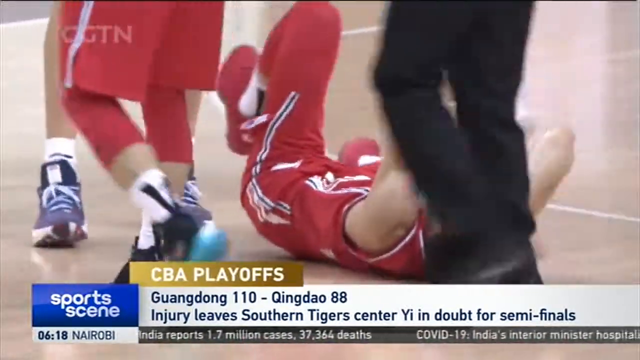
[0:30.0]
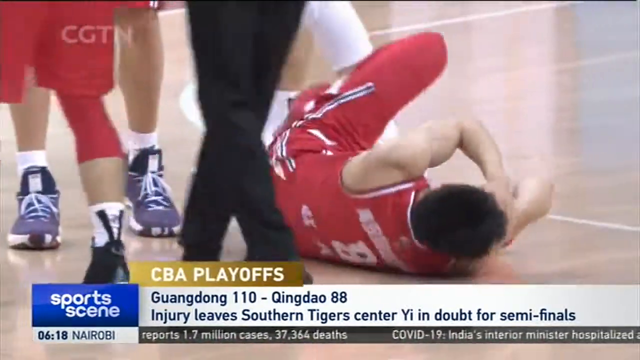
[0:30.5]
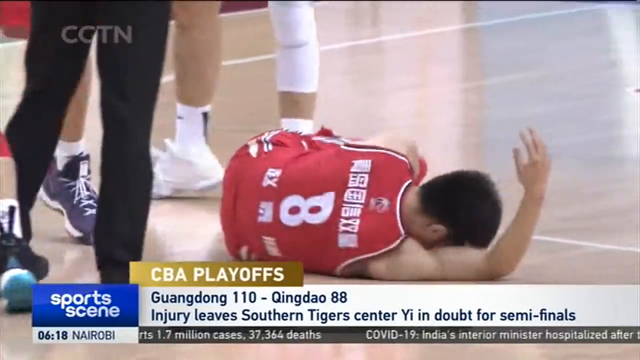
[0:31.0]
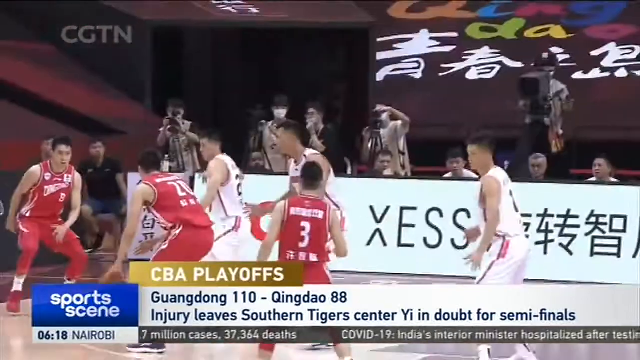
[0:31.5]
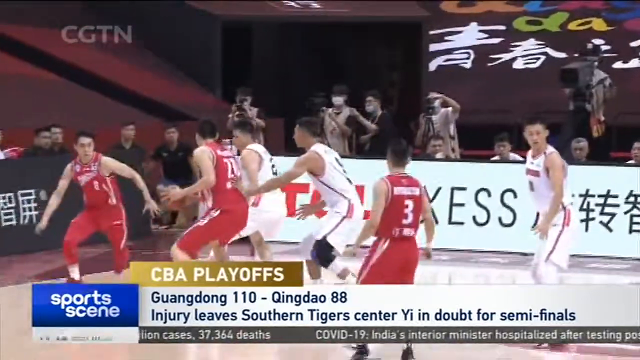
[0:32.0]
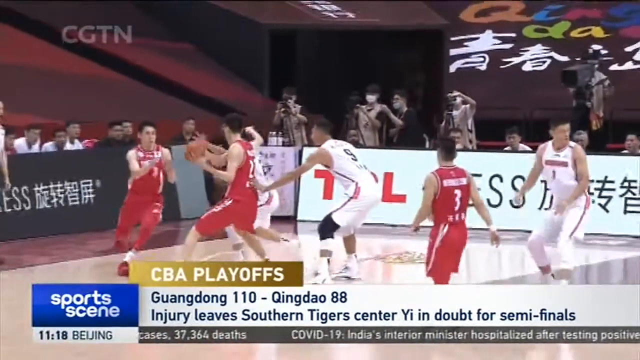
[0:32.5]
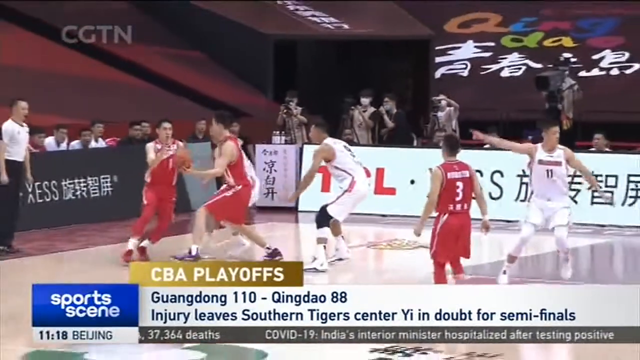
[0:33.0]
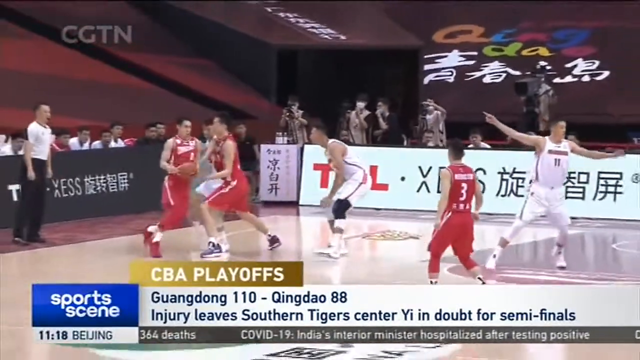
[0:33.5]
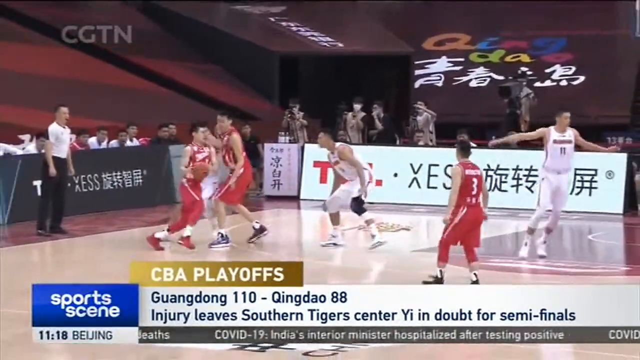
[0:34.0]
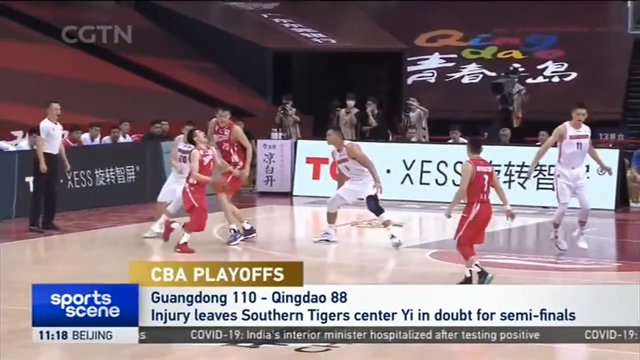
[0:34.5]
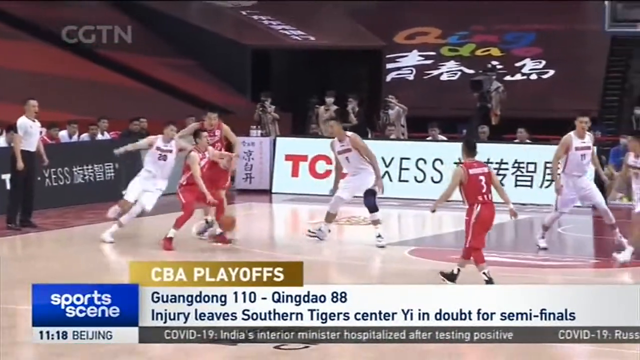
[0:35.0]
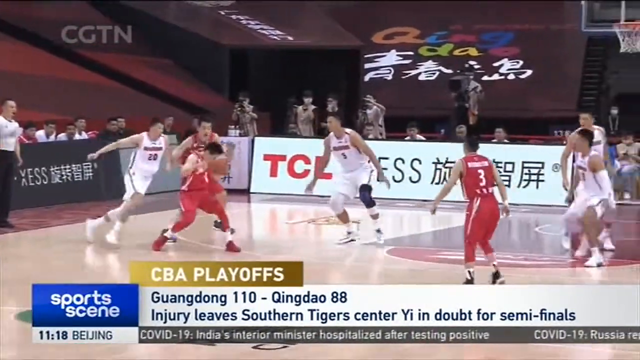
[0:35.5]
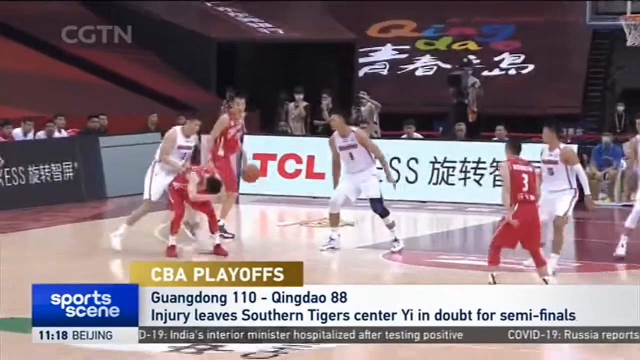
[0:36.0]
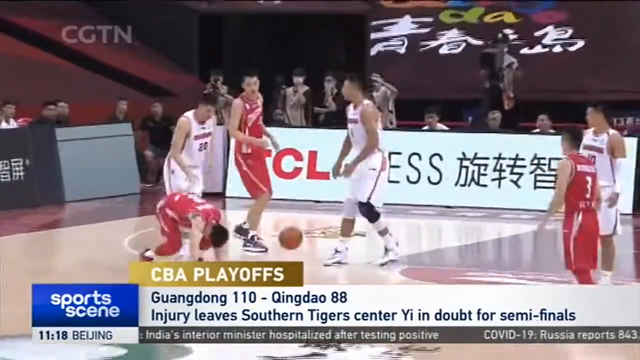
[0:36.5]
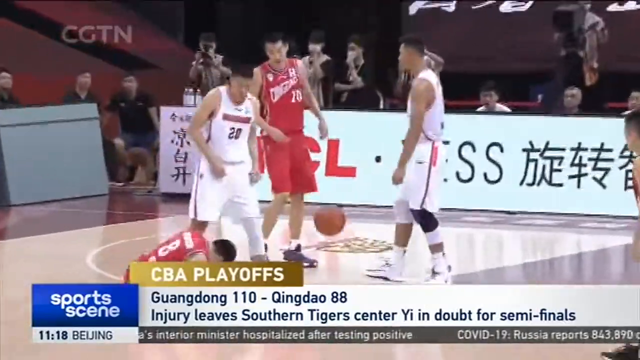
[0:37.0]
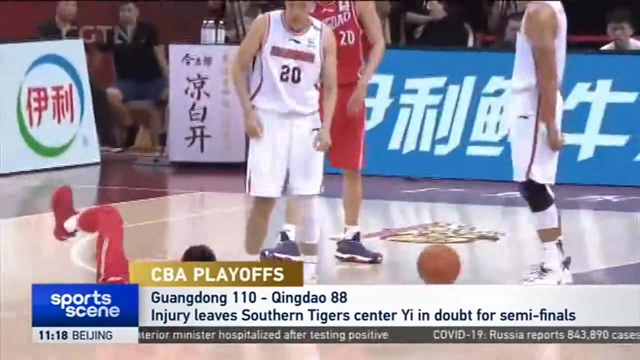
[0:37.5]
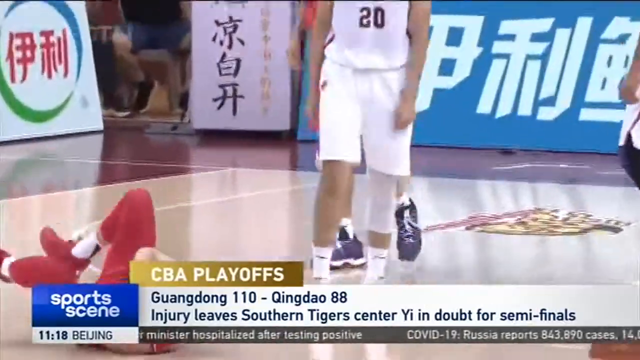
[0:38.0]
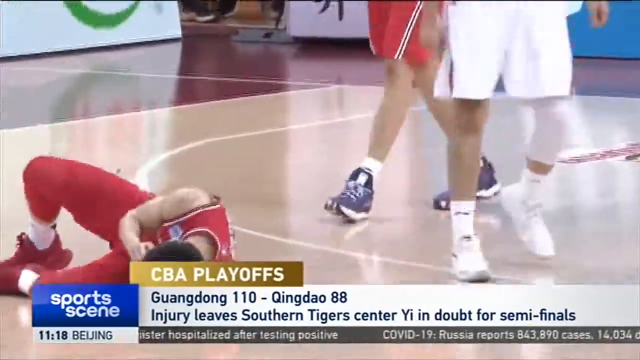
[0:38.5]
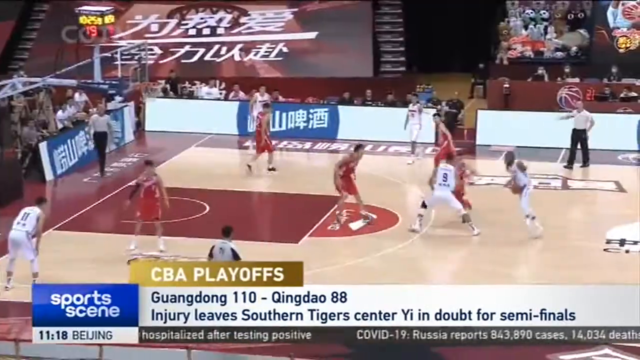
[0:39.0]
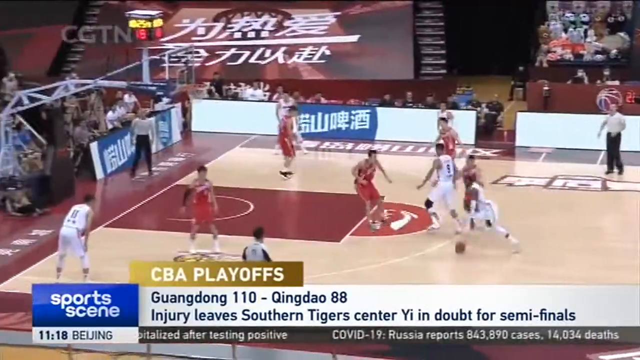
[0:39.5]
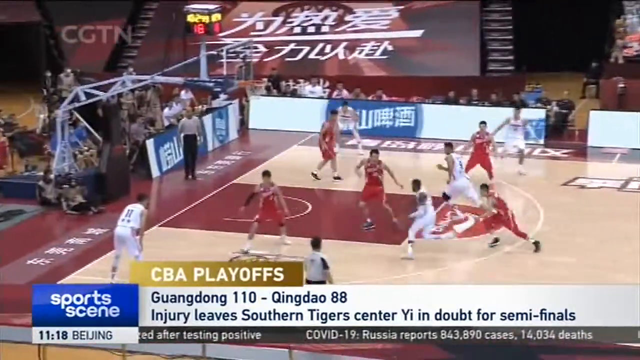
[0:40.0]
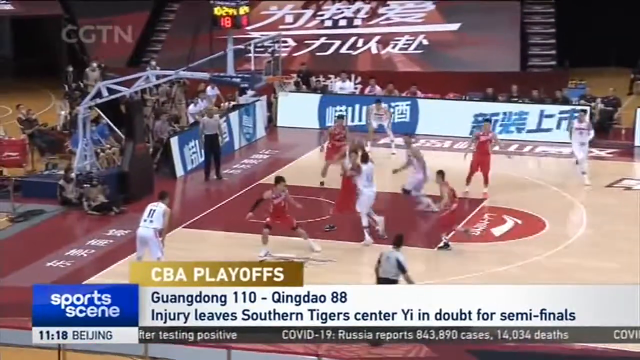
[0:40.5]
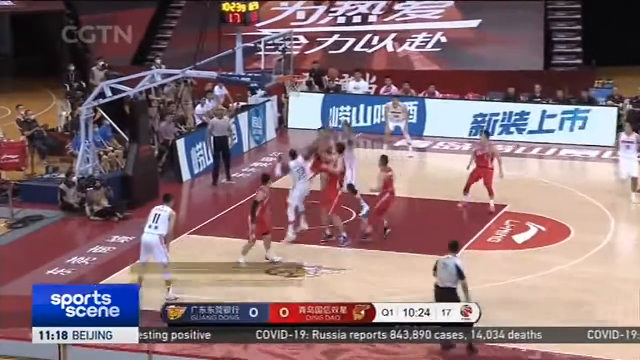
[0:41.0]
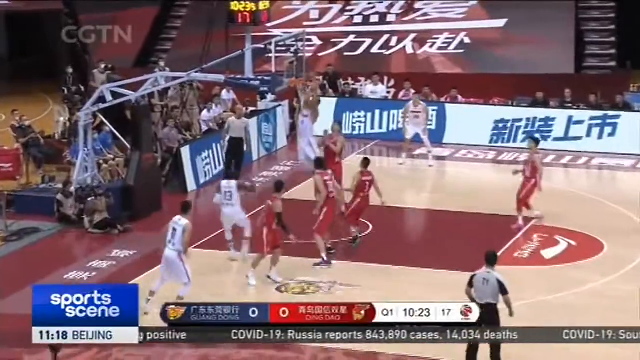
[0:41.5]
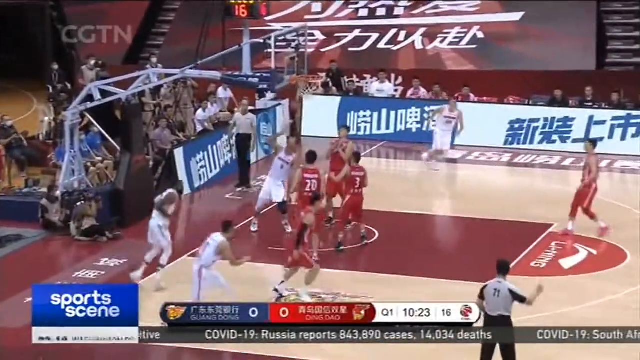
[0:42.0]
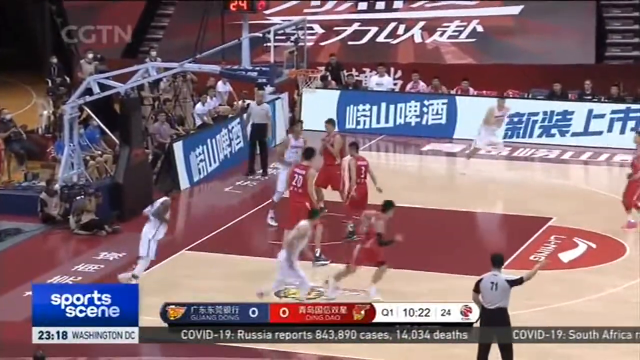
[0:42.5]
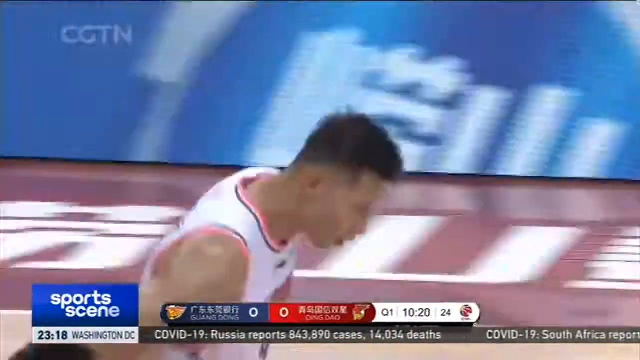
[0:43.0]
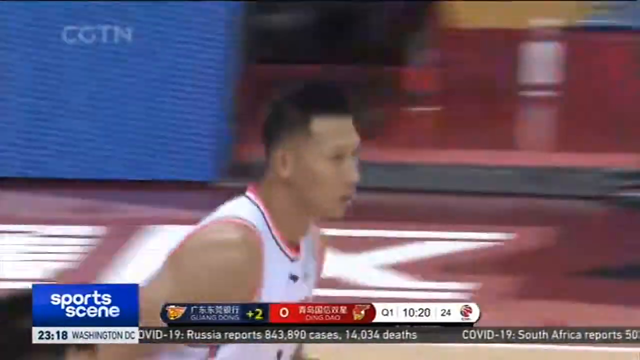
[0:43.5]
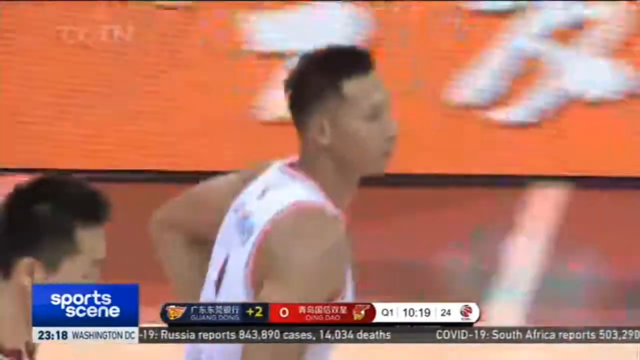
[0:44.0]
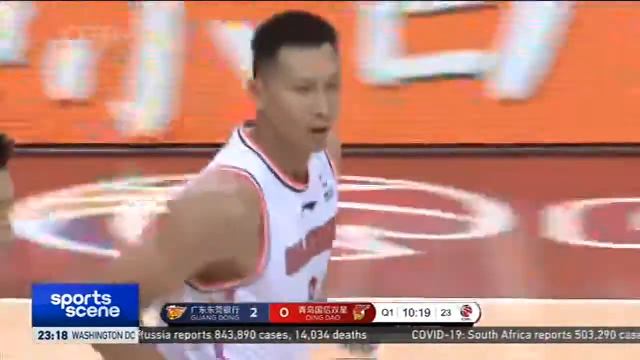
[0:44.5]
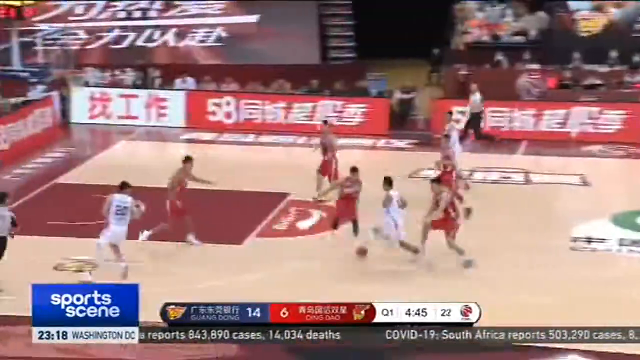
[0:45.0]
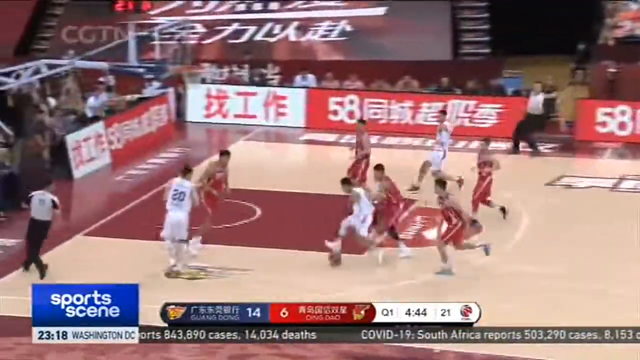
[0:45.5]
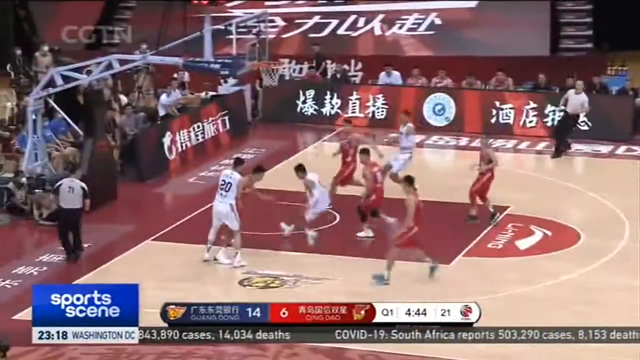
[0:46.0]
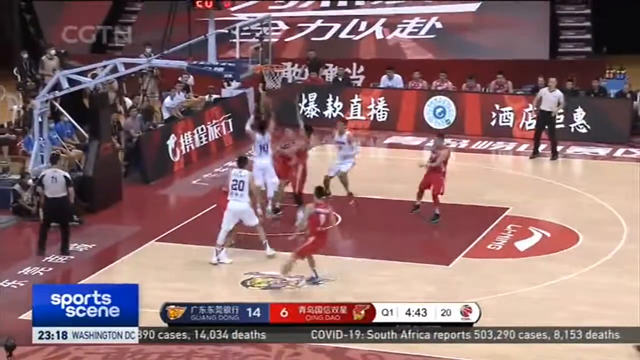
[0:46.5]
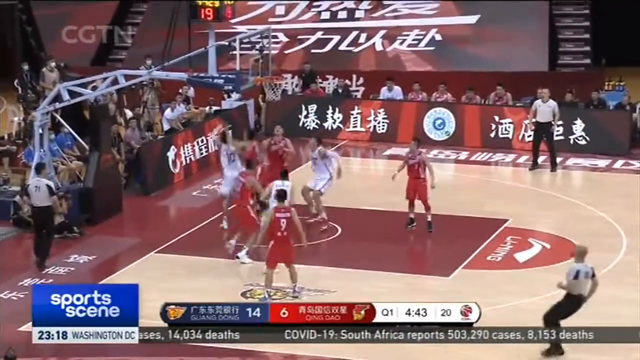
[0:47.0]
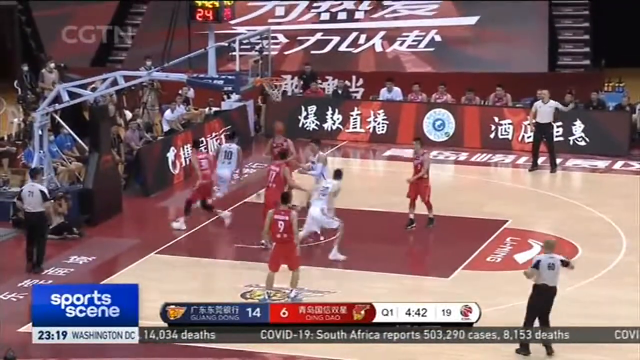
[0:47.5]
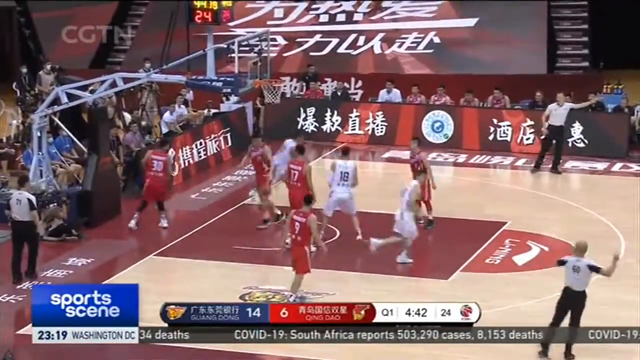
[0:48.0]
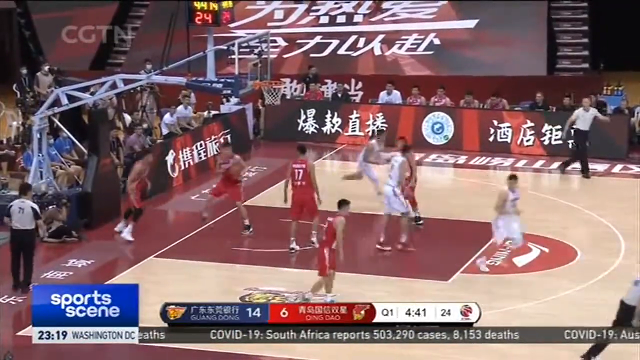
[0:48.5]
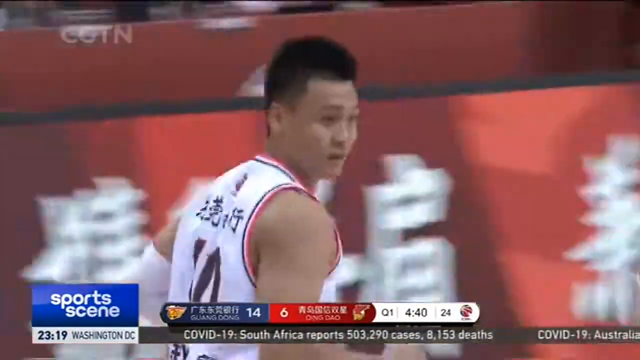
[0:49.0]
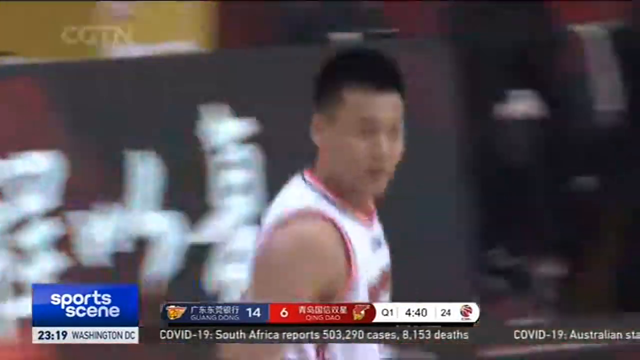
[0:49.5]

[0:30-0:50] Two sets of legs are visible: a player in red shorts and the player rolling on the ground. A referee in black pants stands a little in front of him. The injured player has his feet up in the air as he rolls onto his right side. A replay then shows how he was injured: apparently number 24 comes in with his left arm or hand out and hits him in the face, and he goes straight to the ground, rolling on his butt and onto his left side. Number 13 for the white team throws the ball up for an alley-oop. Two Asian teams are playing: the blue team wears white jerseys and the red team wears red jerseys. The blue team leads 14 to 6, and the player mentioned earlier scores twice. A yellowish-gold banner reads "CBA playoffs" in capital letters, bright yellow on the left and getting darker toward the right, with the final score of both teams underneath. Text at the bottom says the center was injured and is out for the semi-finals, and a line at the bottom reports COVID-19 deaths.